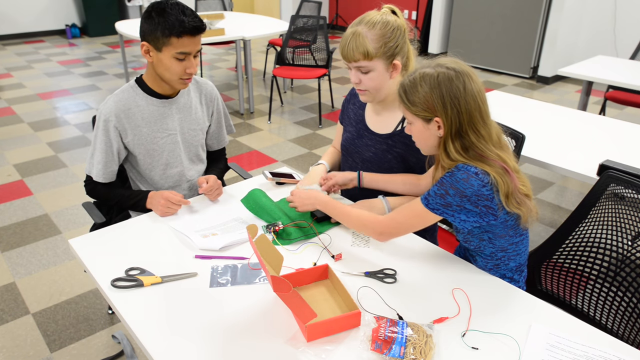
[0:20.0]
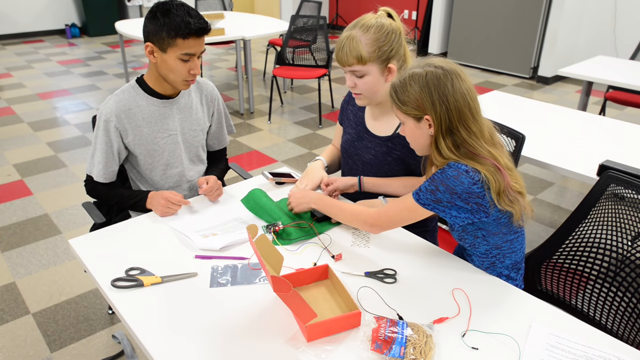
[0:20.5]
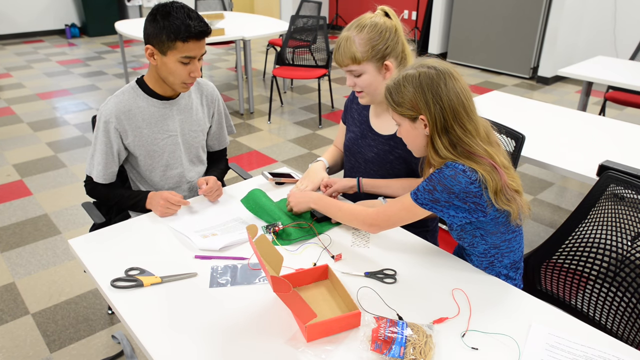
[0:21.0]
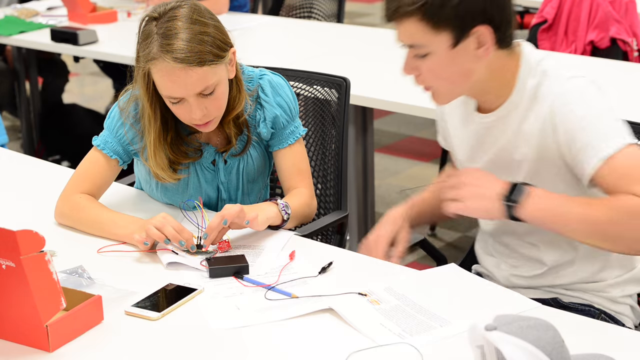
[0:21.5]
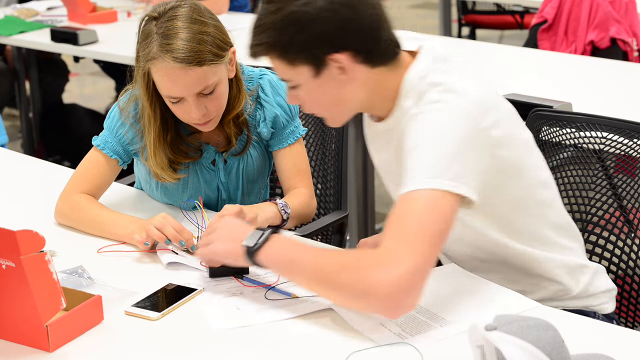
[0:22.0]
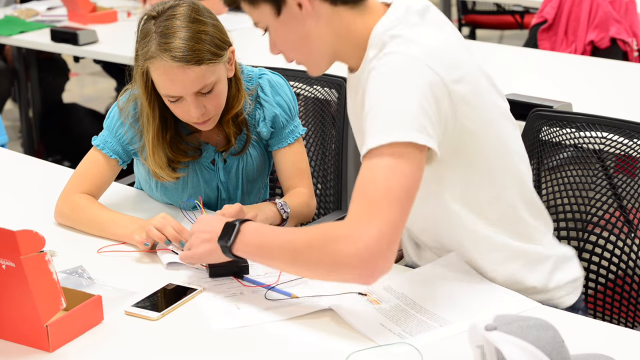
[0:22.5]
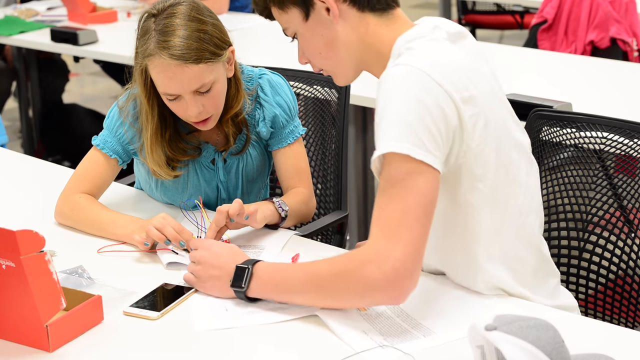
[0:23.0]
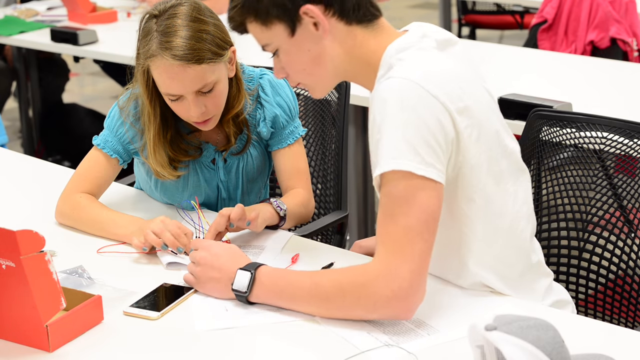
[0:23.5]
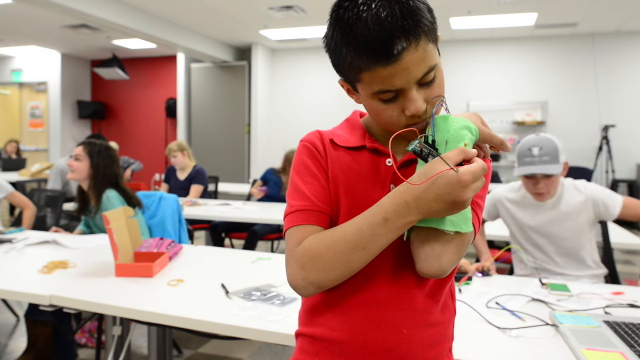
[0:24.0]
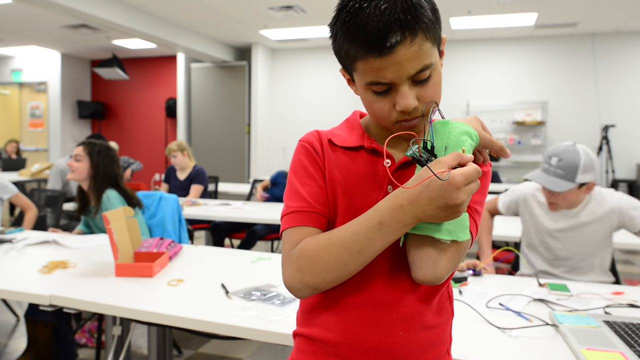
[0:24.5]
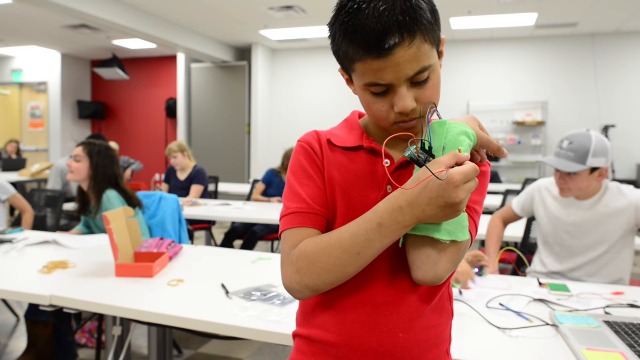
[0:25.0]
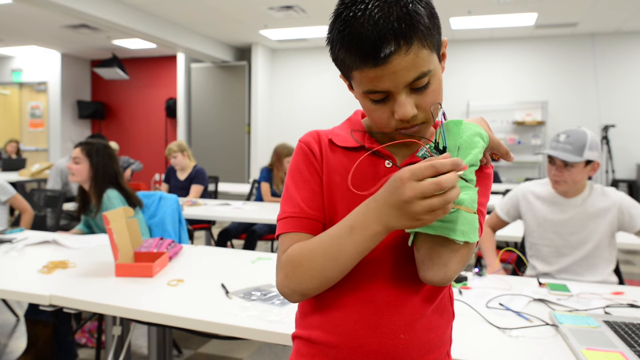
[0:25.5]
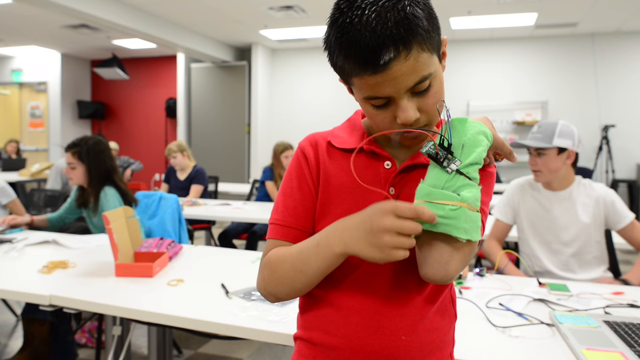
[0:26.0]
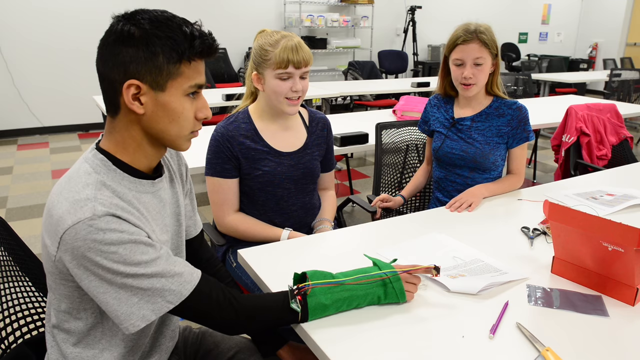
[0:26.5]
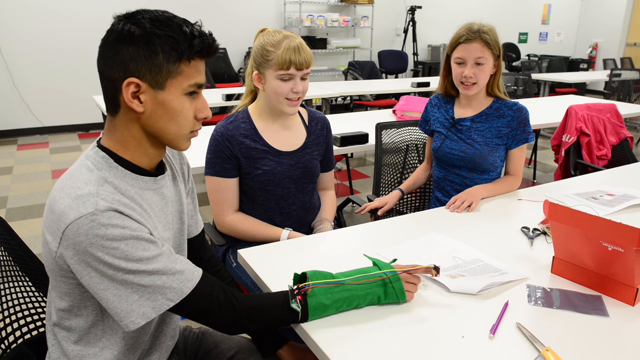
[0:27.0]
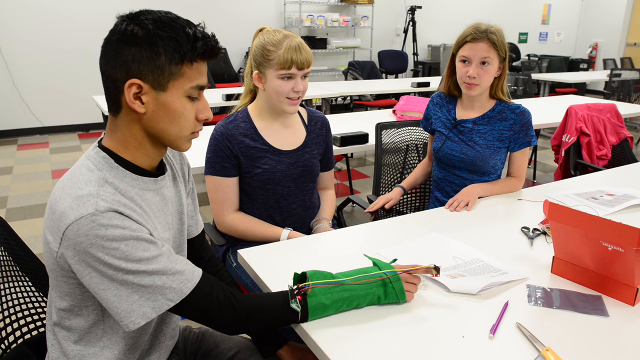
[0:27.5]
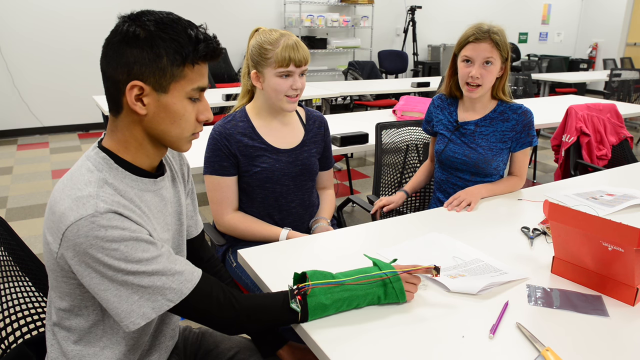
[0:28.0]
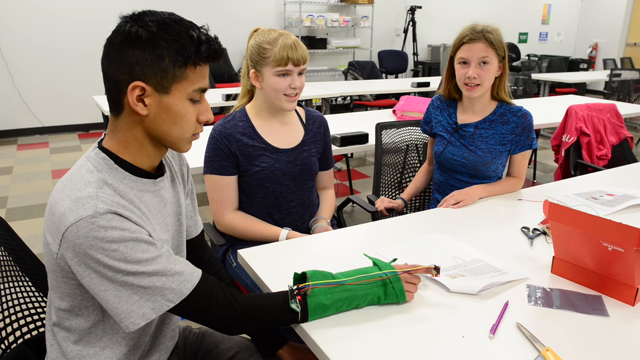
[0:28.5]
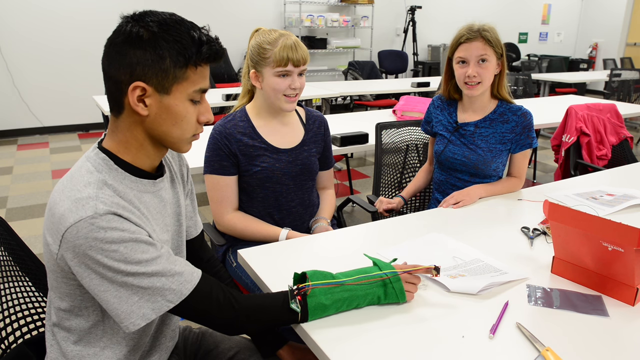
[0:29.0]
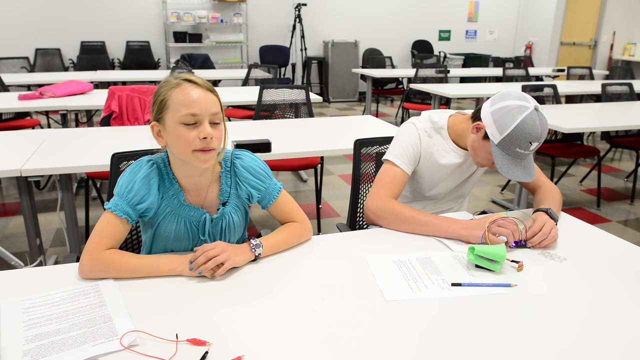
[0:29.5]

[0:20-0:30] A boy and two ladies are at a table with something green on it, trying to fix it; behind them are more tables and chairs. Another shot shows a lady in a blue shirt and a man in a white shirt trying to fix something with wires on a table. A boy in a red t-shirt is shown with something green, which has some wires, installed on his hand, and people are sitting in the background. The two ladies and the boy shown earlier are seen fixing the green thing, and then the boy is wearing the green thing they were making.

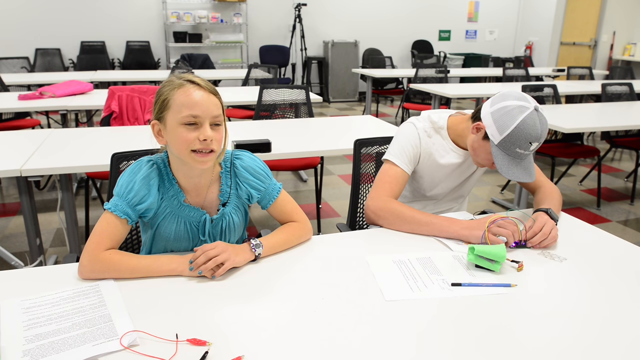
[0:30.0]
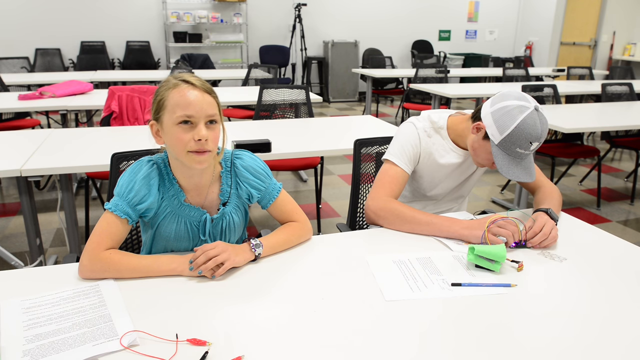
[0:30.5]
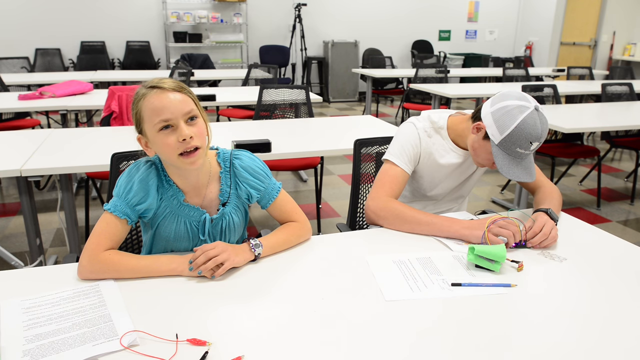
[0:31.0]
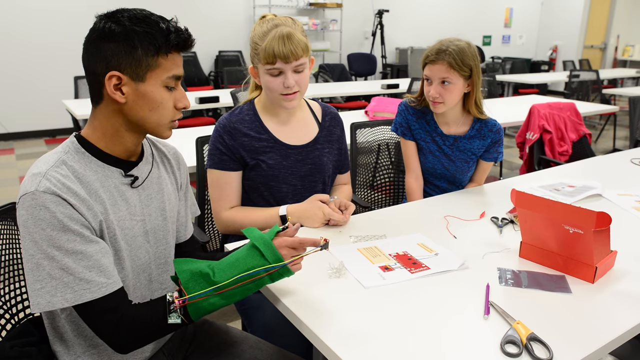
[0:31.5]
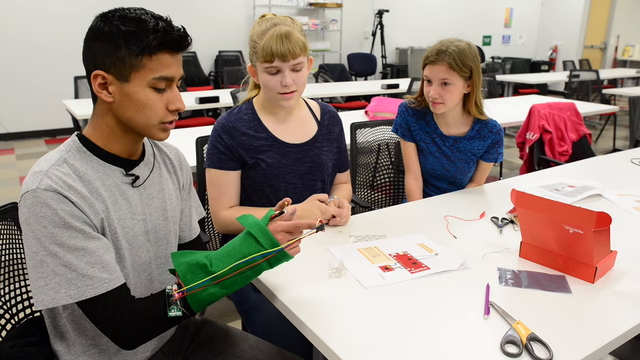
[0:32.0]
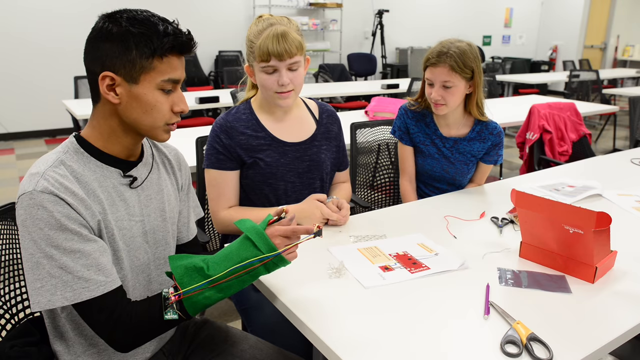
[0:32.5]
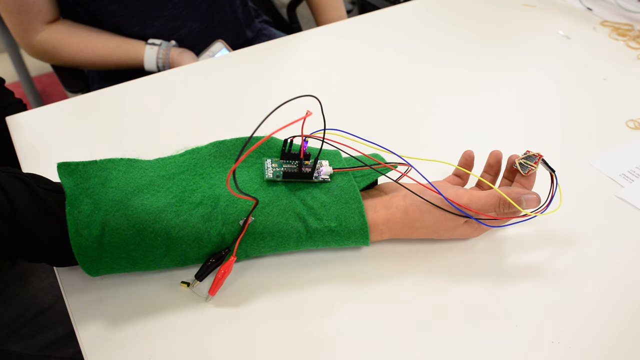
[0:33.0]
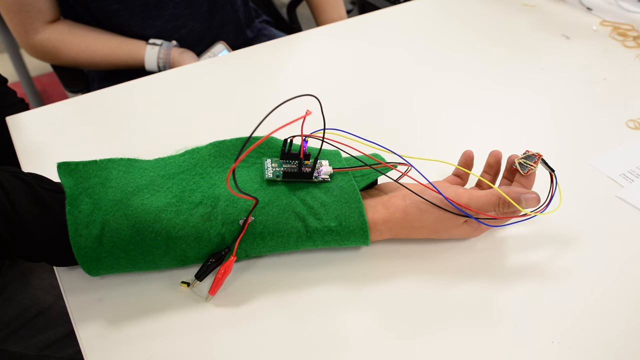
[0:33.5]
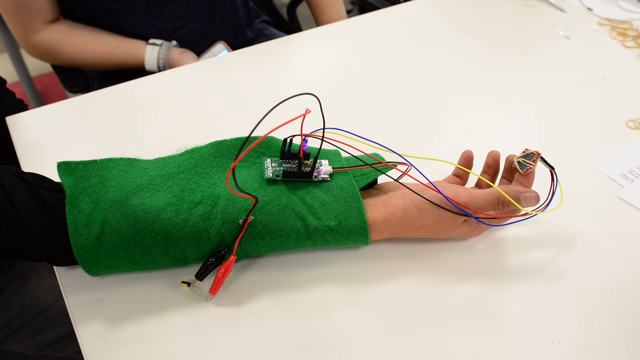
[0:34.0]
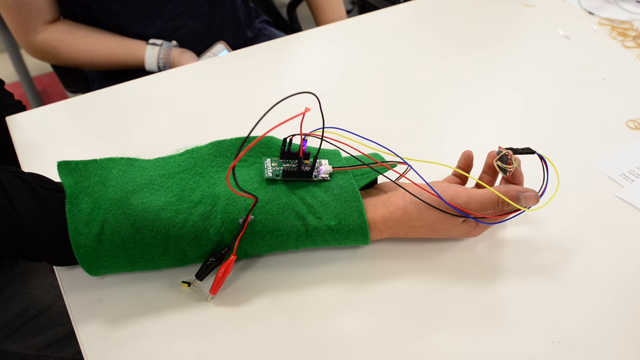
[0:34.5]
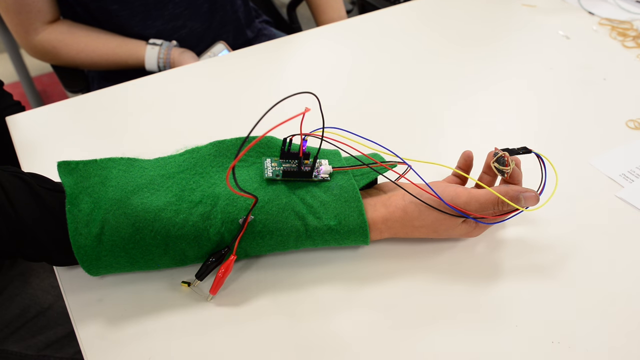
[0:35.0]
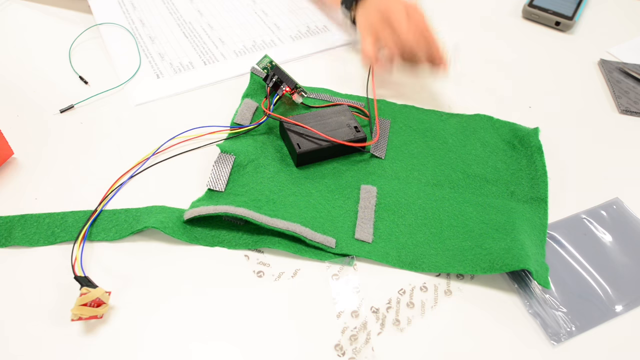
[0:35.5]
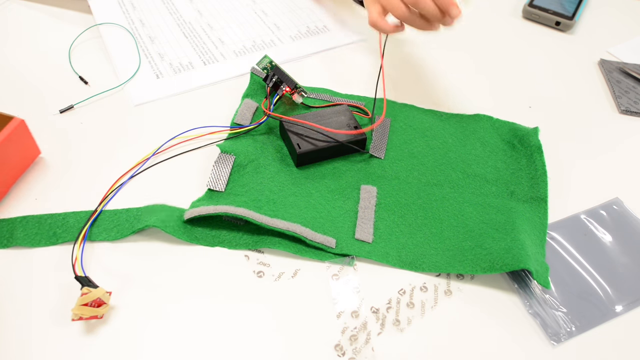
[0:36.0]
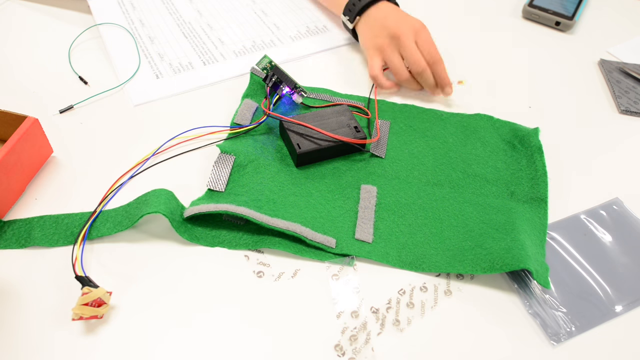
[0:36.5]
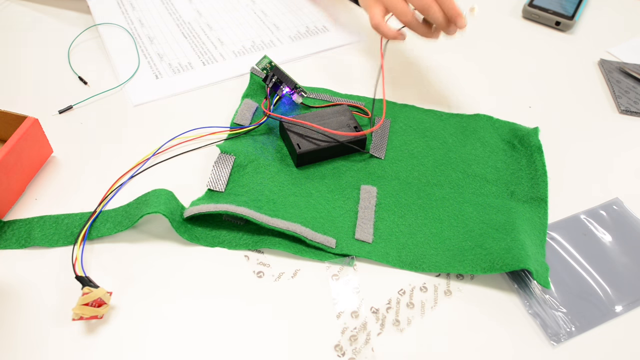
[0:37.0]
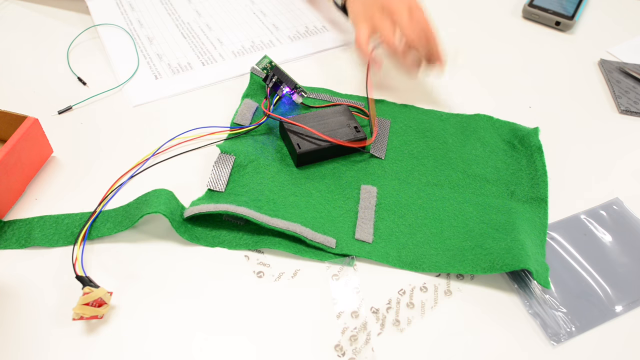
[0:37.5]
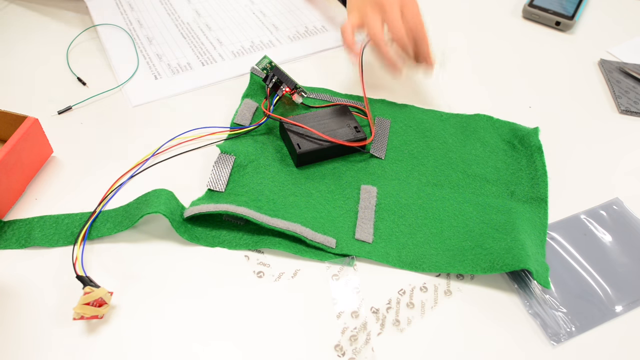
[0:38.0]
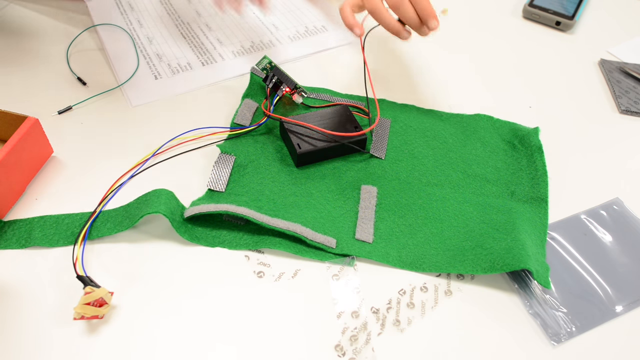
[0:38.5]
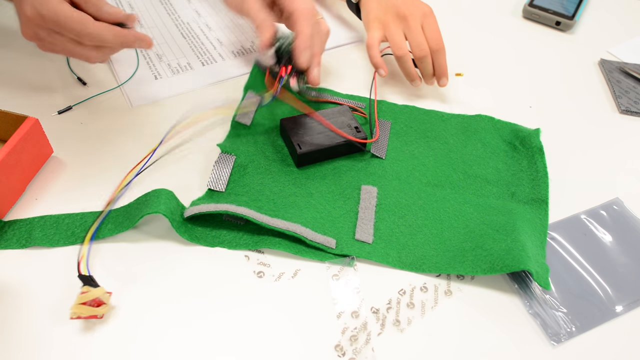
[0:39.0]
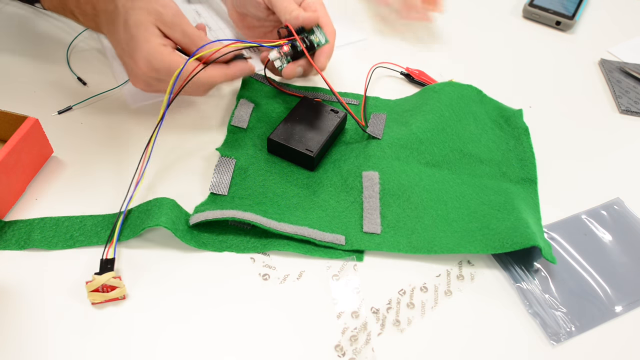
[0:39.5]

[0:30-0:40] A boy and two ladies are sitting on chairs with a table in front of them holding a red box. The boy has something green installed on his hand, with a connection running from the green thing to the tip of his finger. Several tables and chairs fill the room in the background. The boy places his hand on the table, and the connection from the green thing to his fingertip is visible; some wires are connected, and a light is seen in the connection.